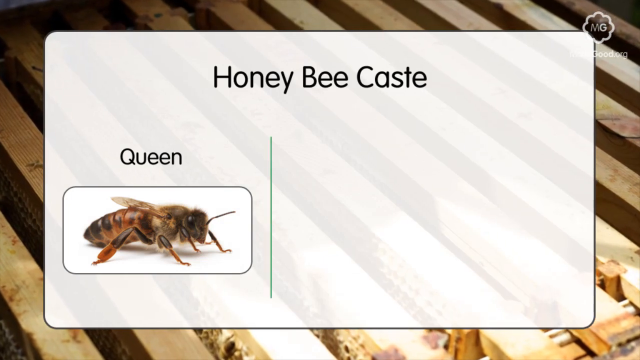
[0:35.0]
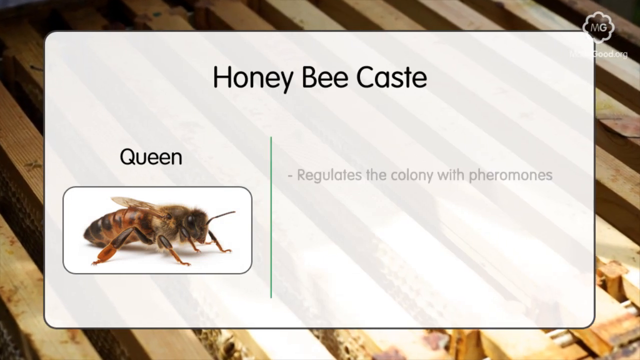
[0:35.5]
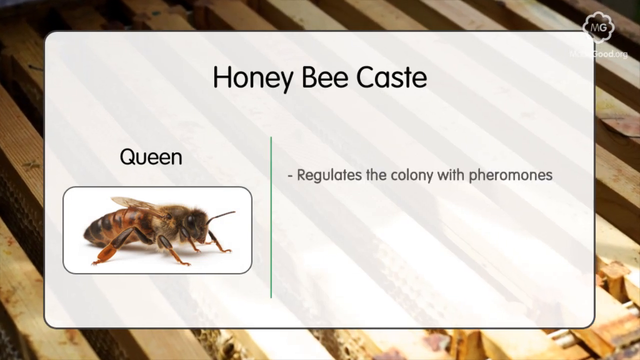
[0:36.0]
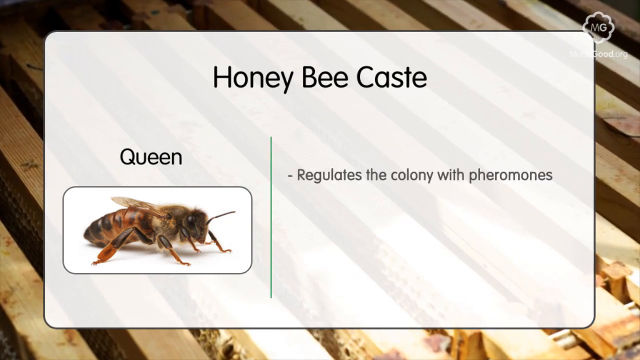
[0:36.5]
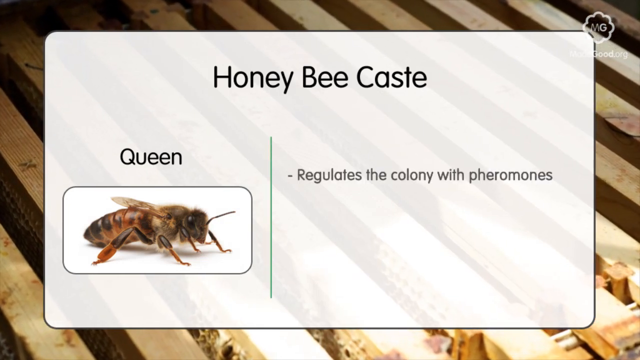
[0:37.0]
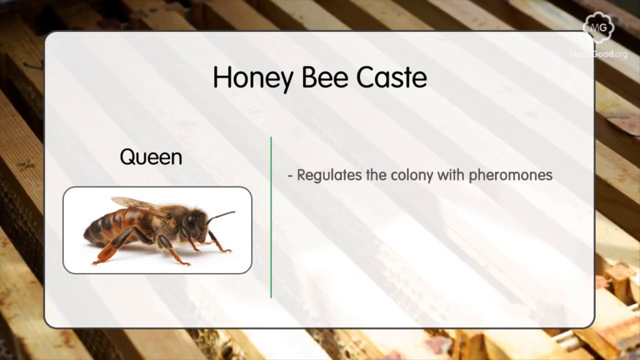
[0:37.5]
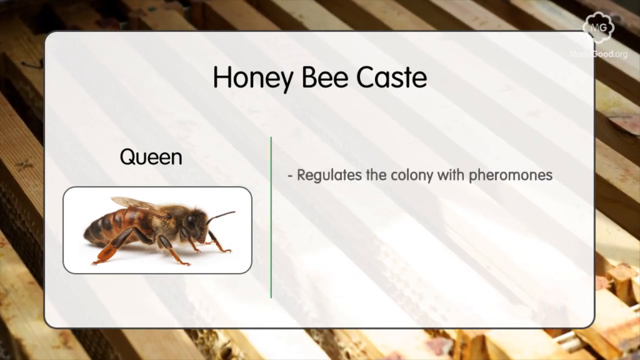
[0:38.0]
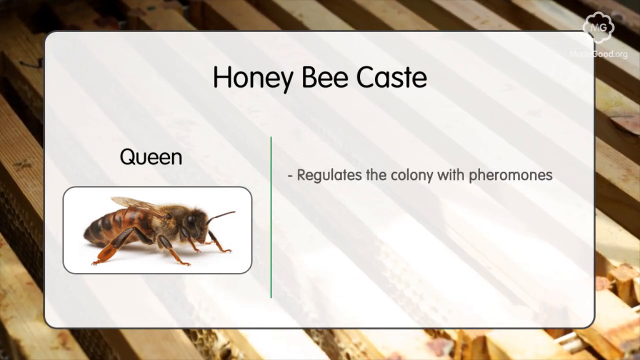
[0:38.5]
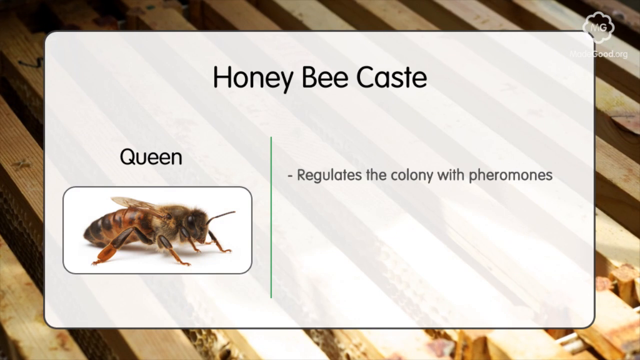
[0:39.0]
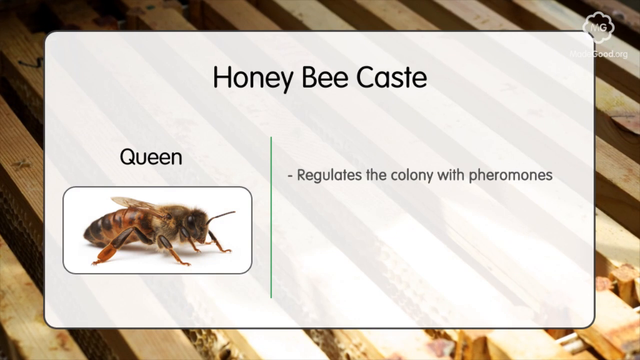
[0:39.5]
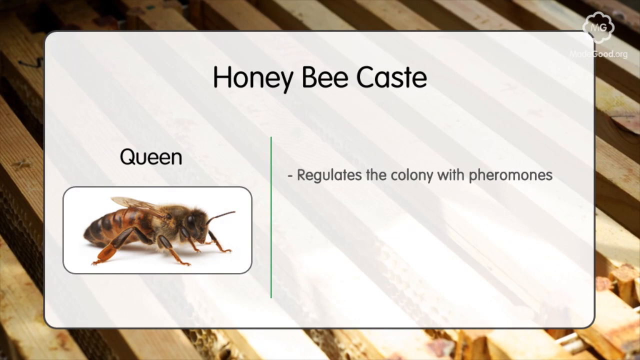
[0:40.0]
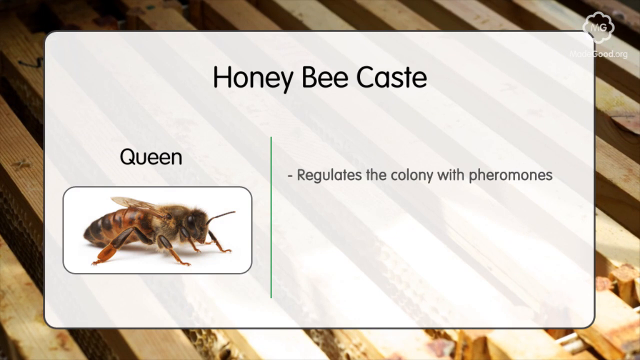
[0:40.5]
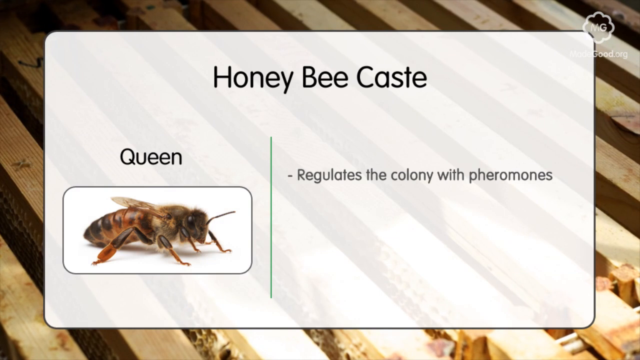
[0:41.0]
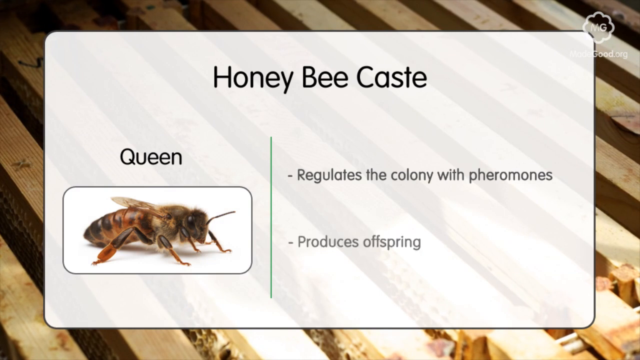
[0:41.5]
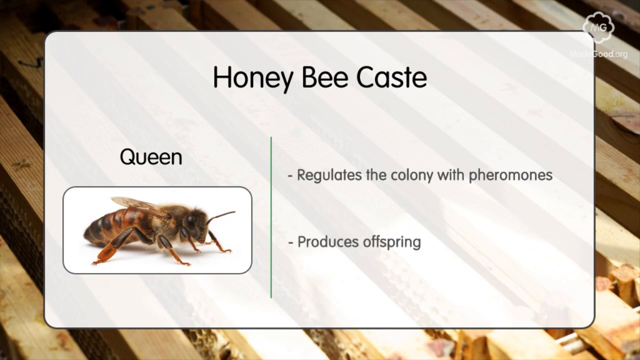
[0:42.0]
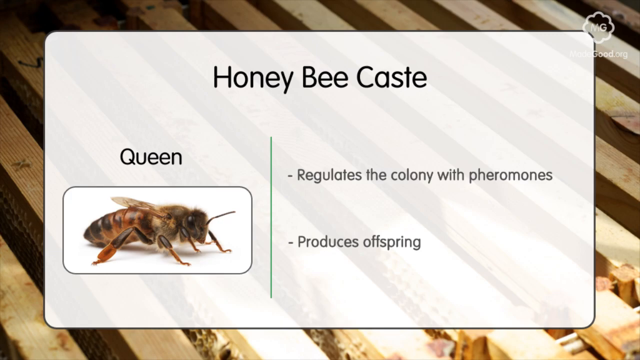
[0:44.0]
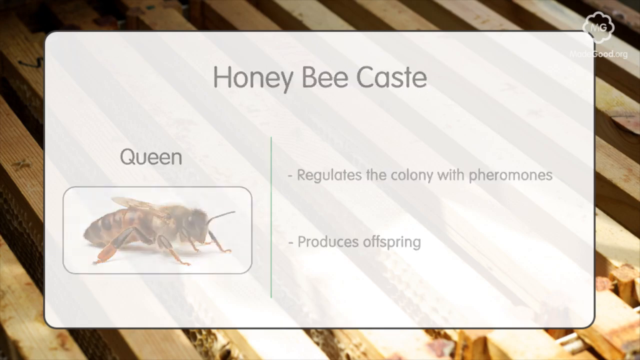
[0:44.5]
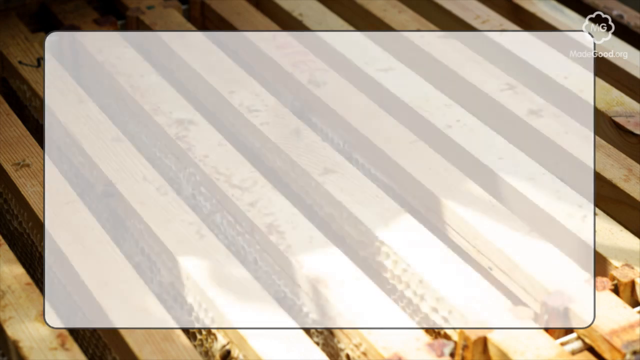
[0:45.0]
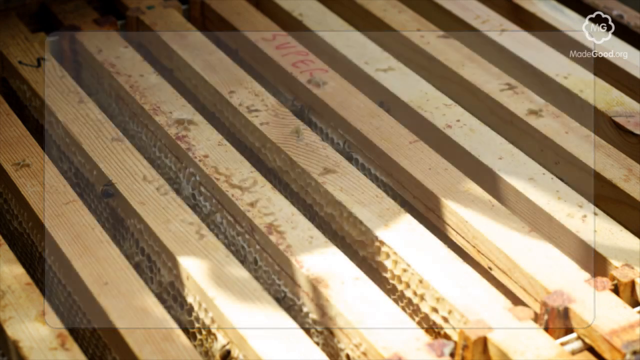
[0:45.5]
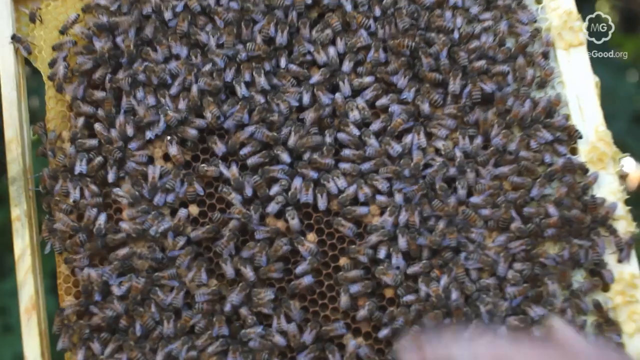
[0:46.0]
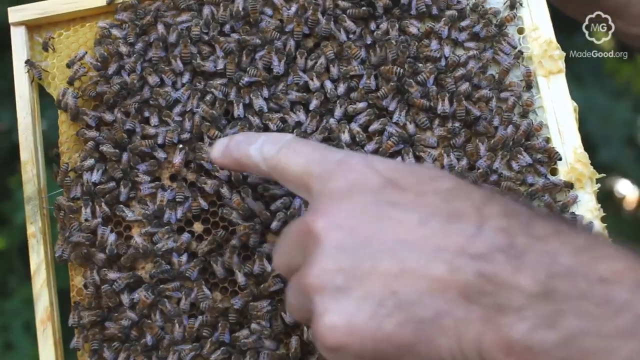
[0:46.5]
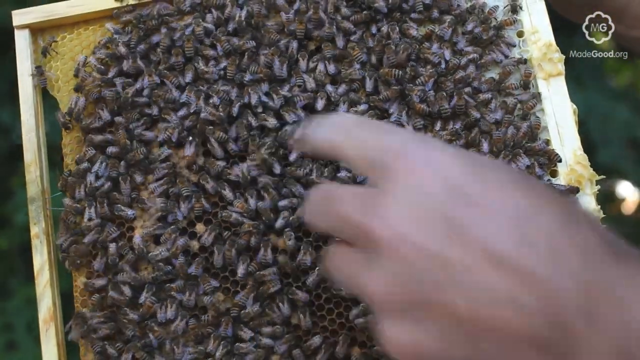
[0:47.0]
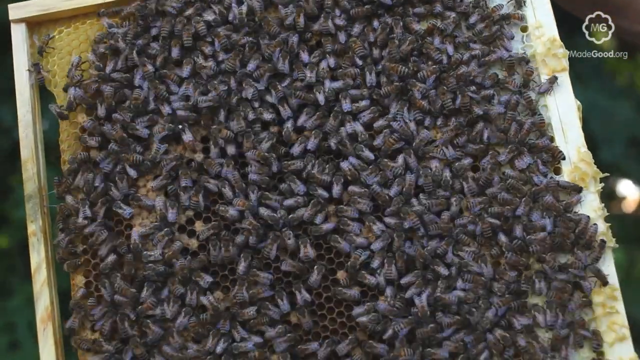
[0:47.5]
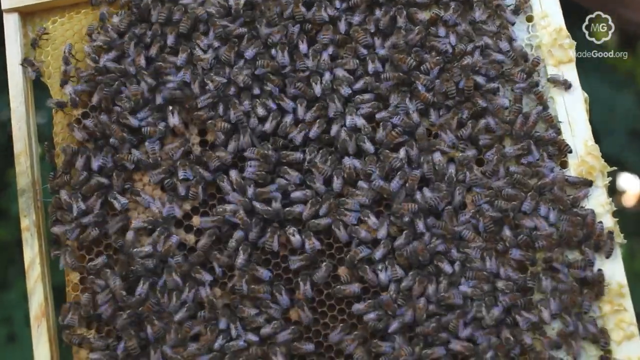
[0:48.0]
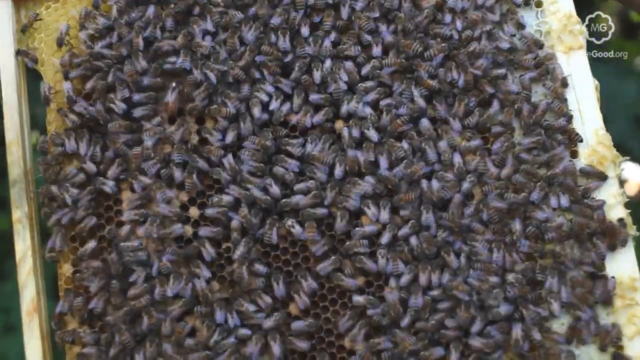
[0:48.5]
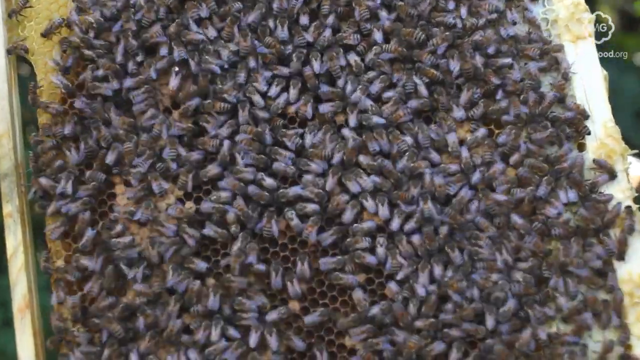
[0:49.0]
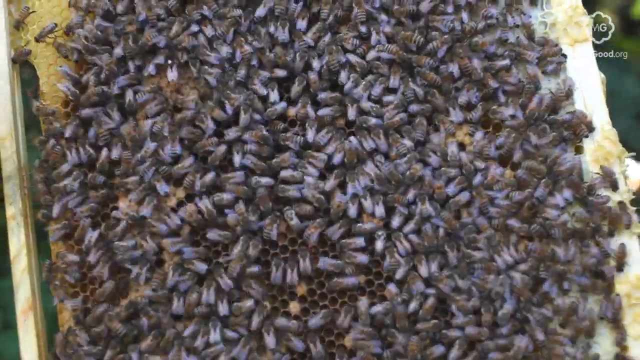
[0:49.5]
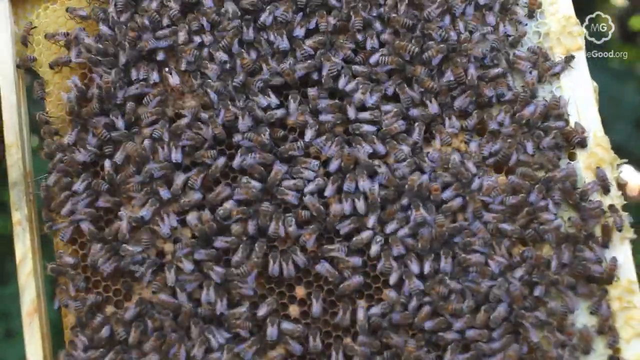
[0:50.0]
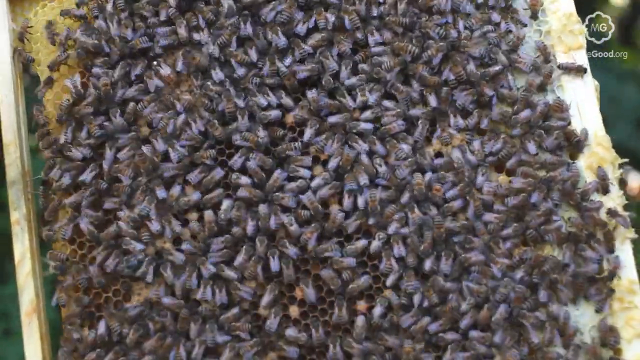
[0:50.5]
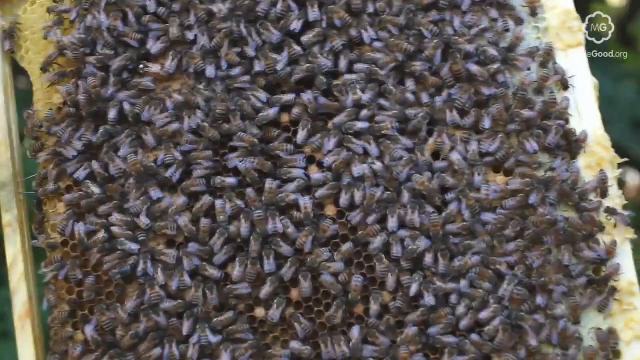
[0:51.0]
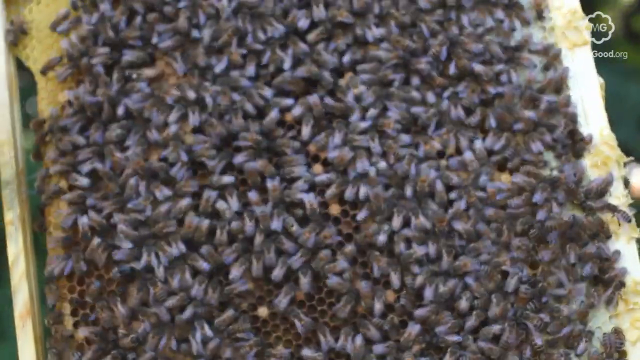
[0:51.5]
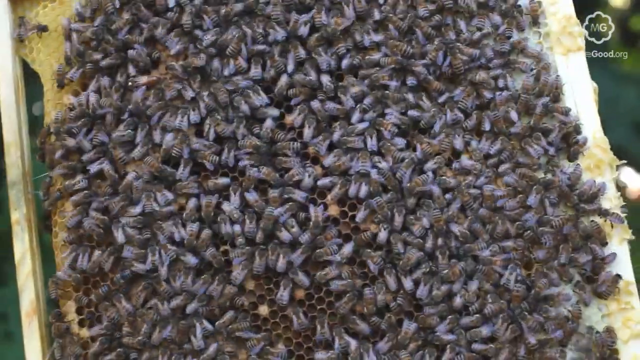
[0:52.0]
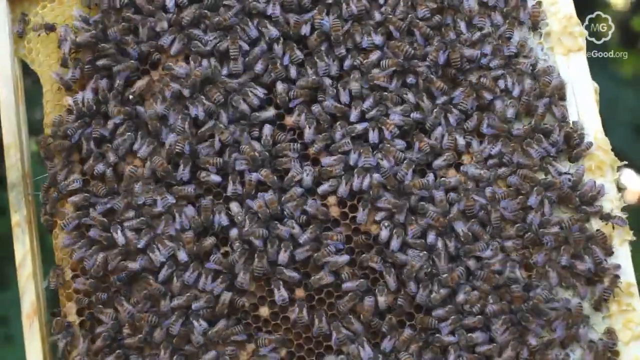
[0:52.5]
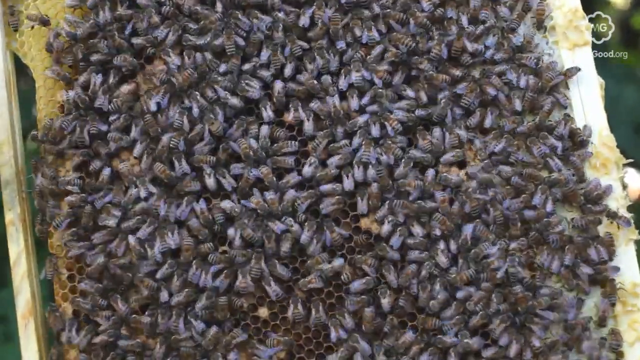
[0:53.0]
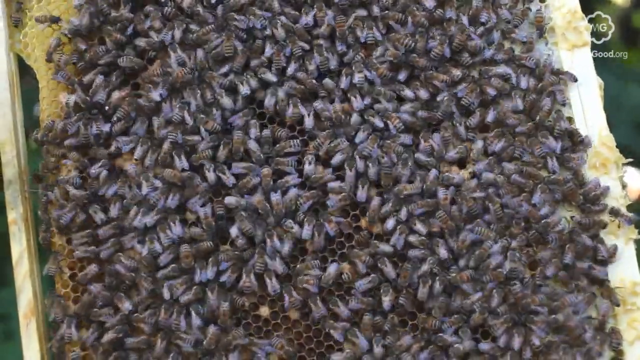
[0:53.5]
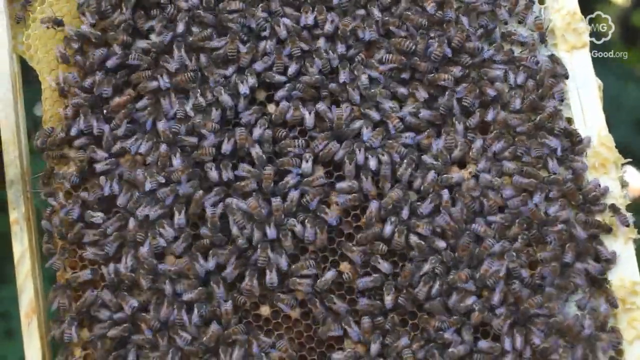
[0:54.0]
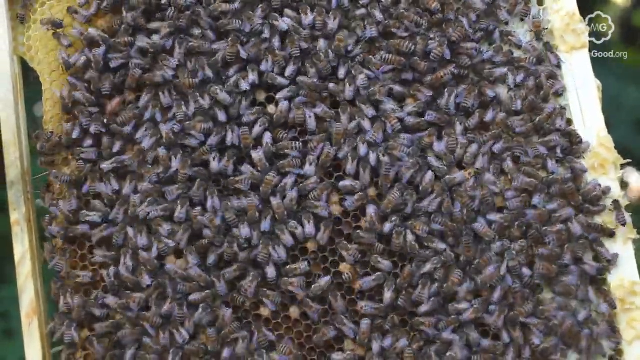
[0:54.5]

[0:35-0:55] Text at the top reads "honeybee cast" and below it "queen", with an image of a queen bee that has a long body, a variety of limbs and a black backside. The text says it "regulates the colony with pheromones and produces offspring". This is on a white background. Next, many bees swarm on what is likely a honeycomb or something similar, with a wooden outer part around the center. A person, who looks like a man, points to one specific bee that could be a queen bee. Many bees are swarming around and look like they are poking at something, all on the center with many circles.